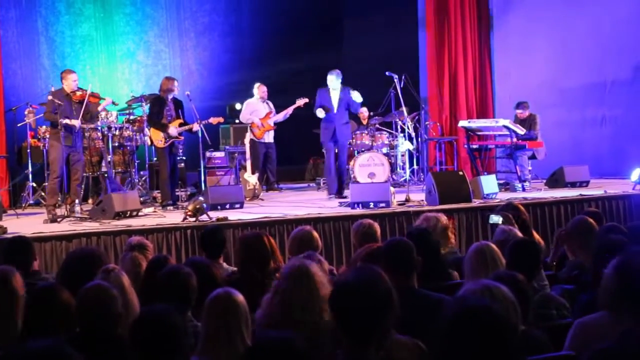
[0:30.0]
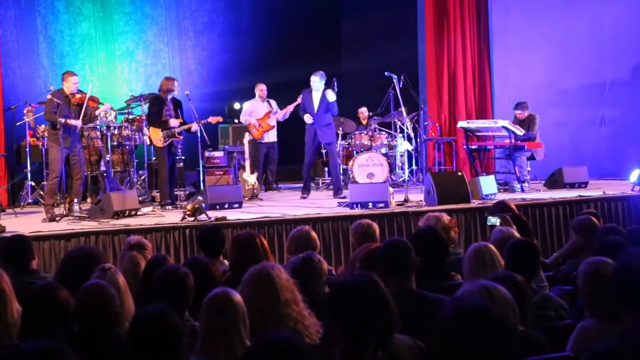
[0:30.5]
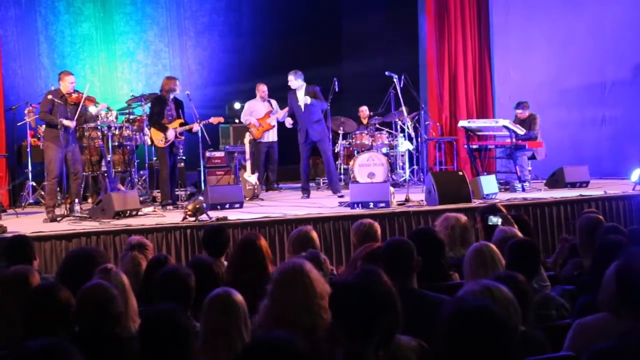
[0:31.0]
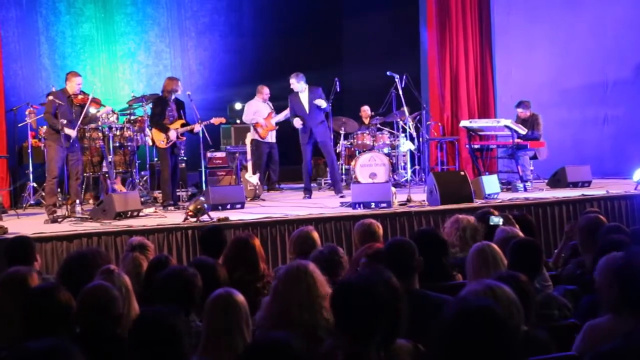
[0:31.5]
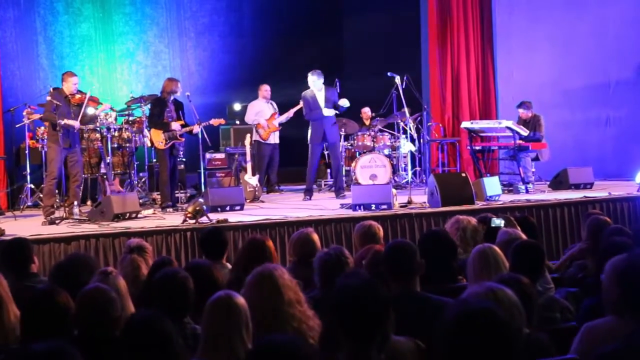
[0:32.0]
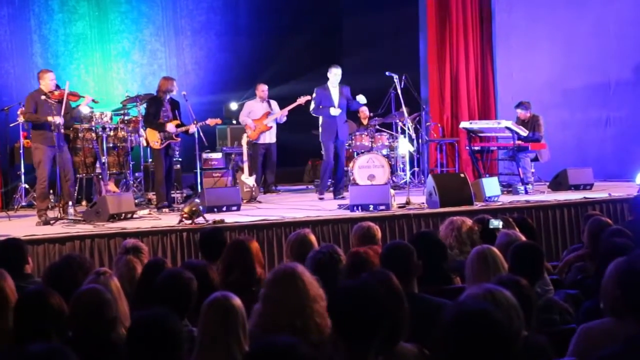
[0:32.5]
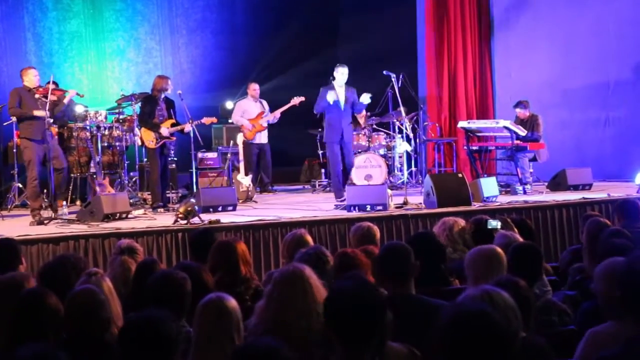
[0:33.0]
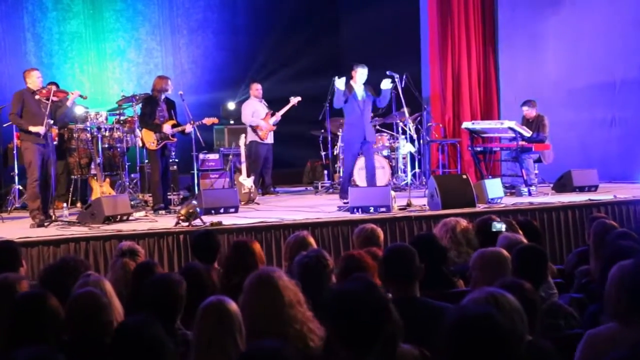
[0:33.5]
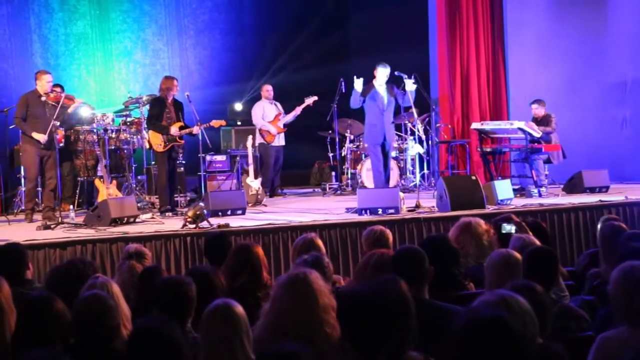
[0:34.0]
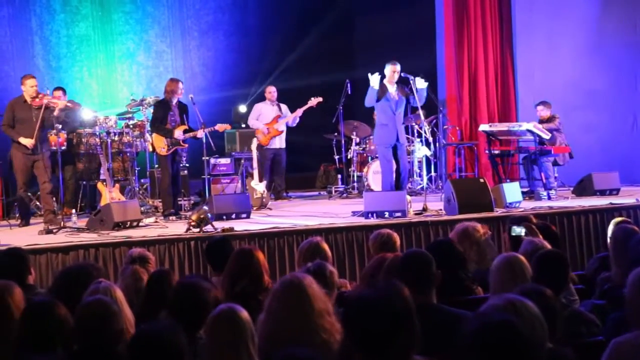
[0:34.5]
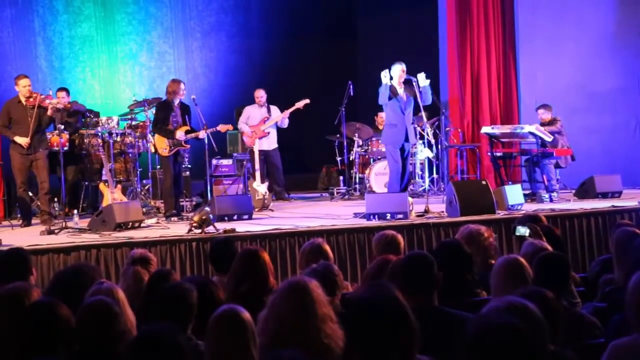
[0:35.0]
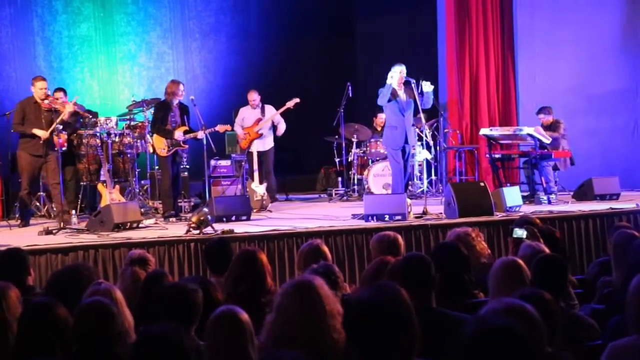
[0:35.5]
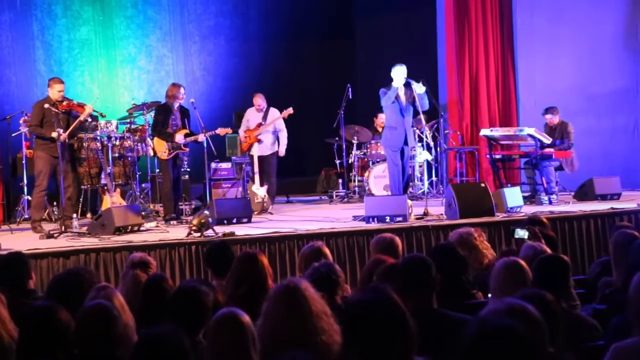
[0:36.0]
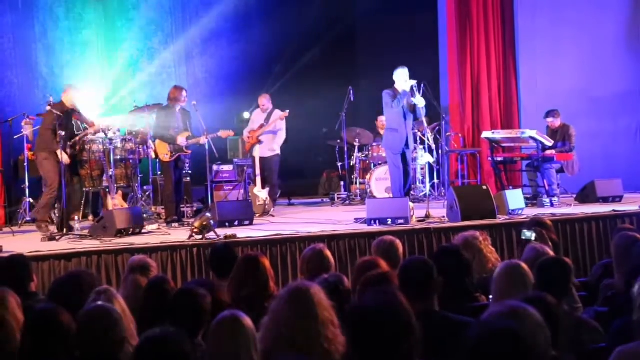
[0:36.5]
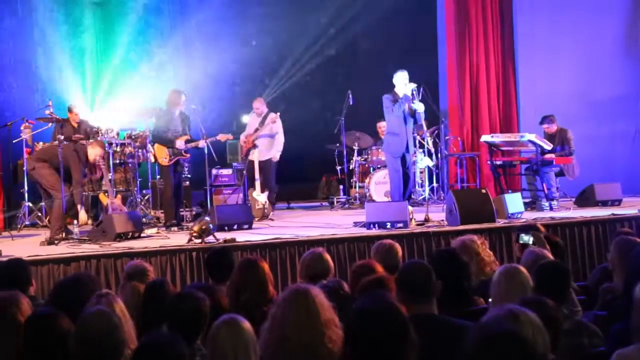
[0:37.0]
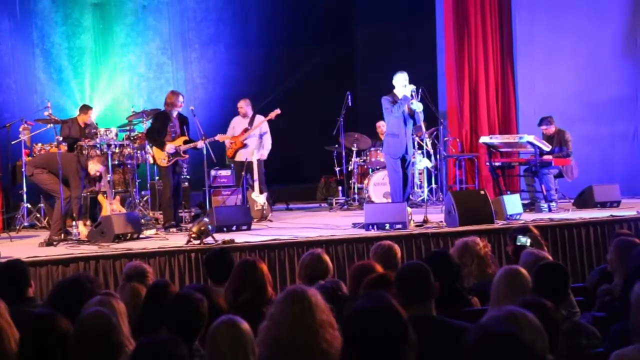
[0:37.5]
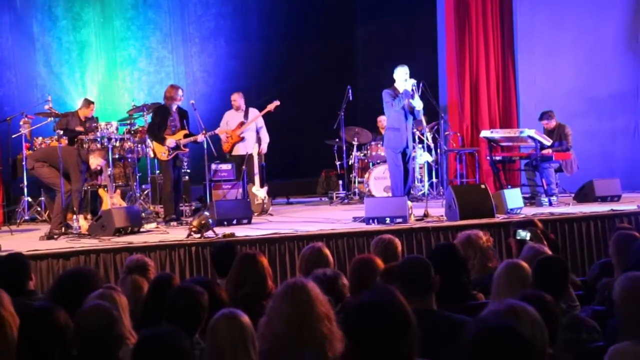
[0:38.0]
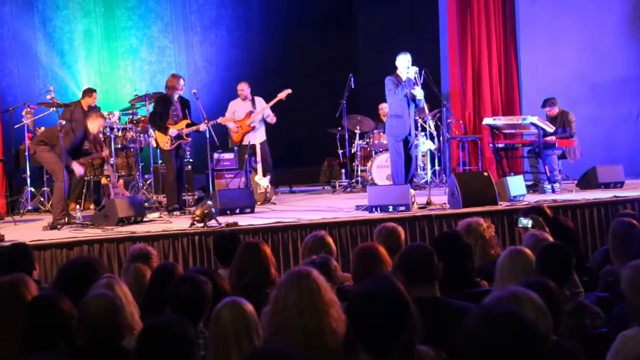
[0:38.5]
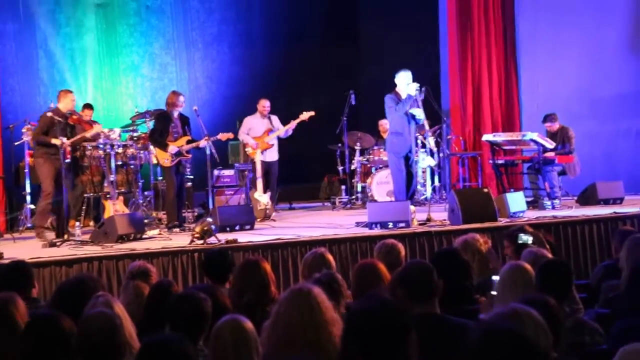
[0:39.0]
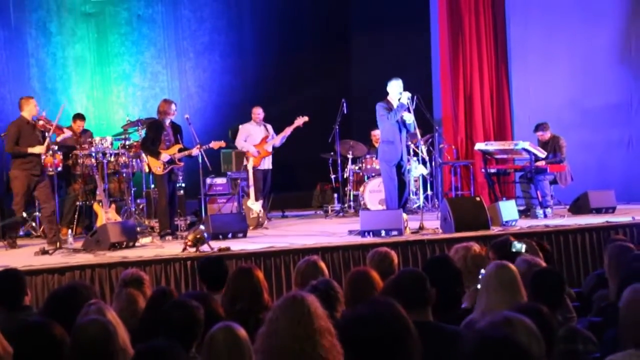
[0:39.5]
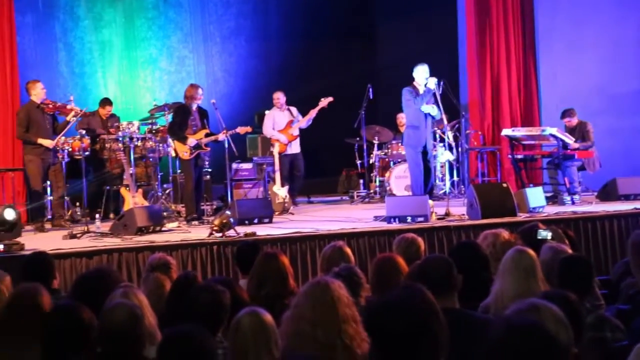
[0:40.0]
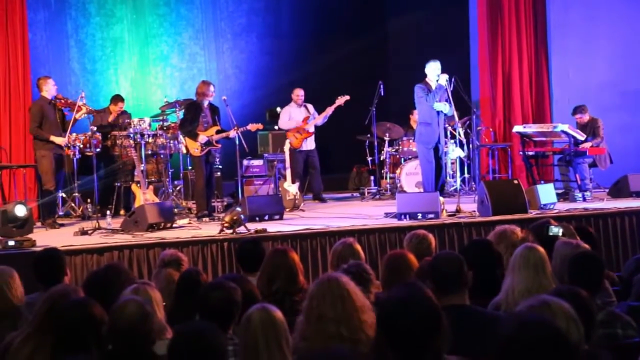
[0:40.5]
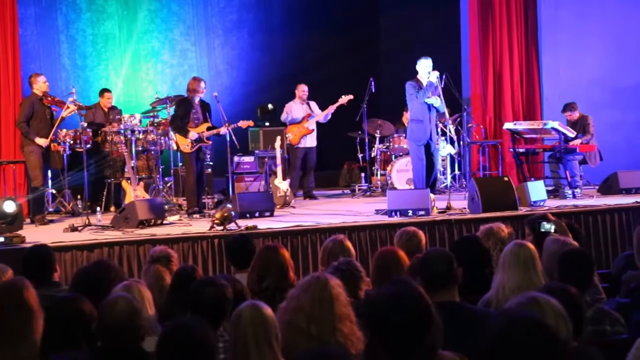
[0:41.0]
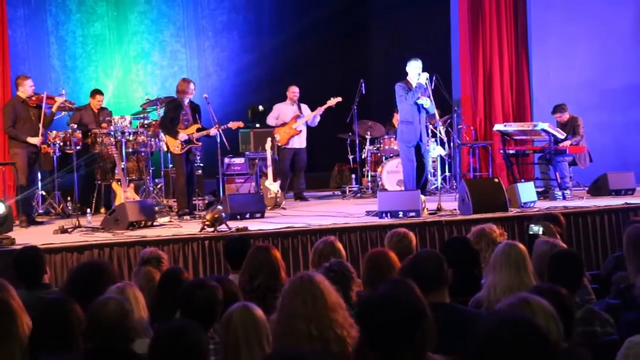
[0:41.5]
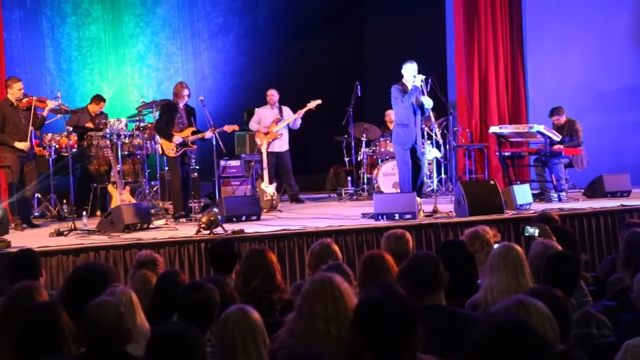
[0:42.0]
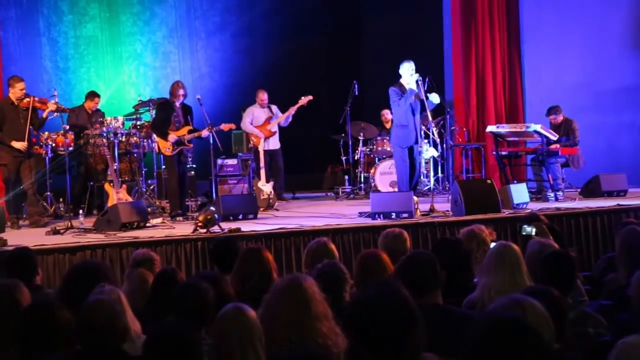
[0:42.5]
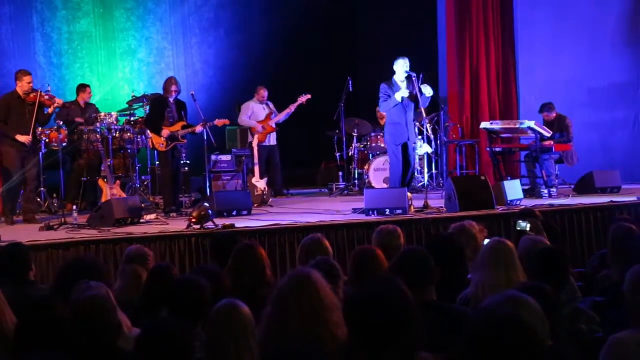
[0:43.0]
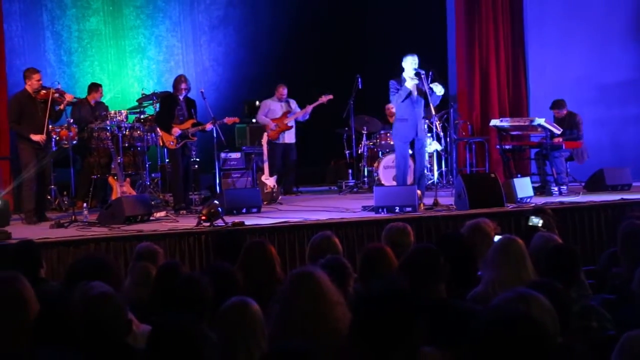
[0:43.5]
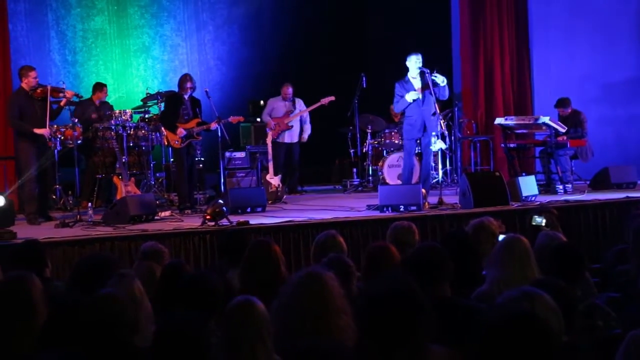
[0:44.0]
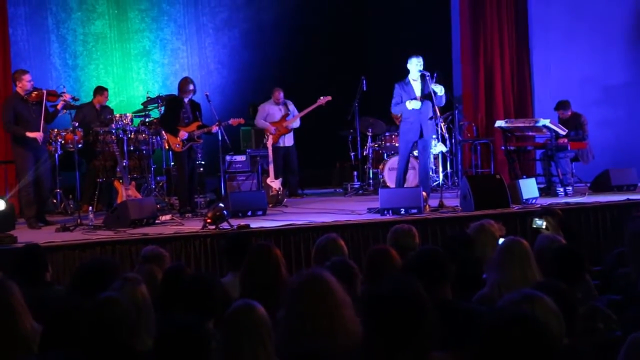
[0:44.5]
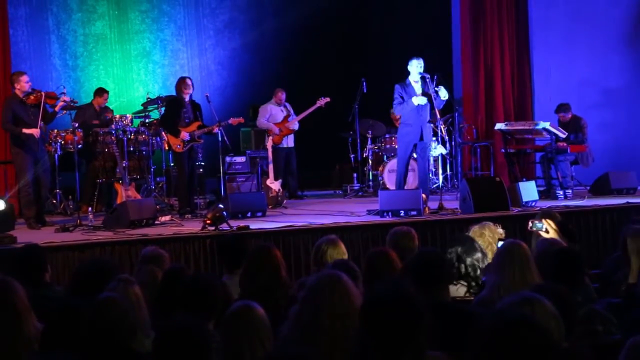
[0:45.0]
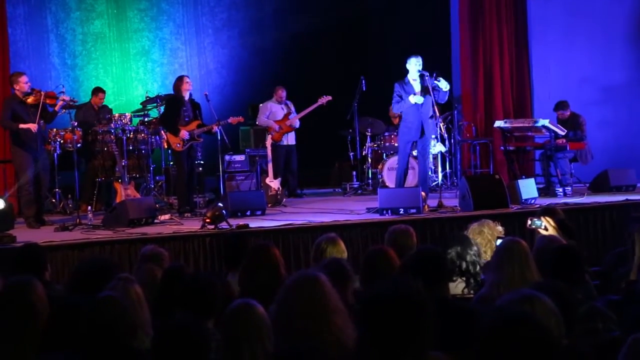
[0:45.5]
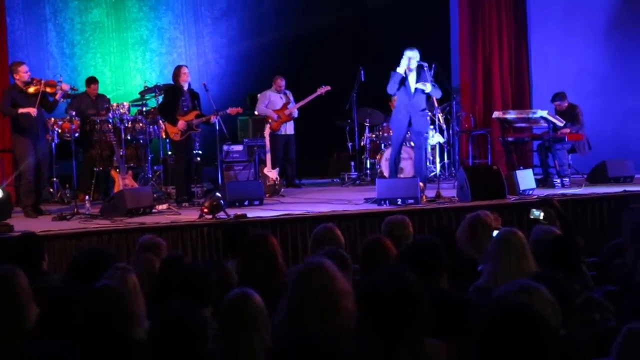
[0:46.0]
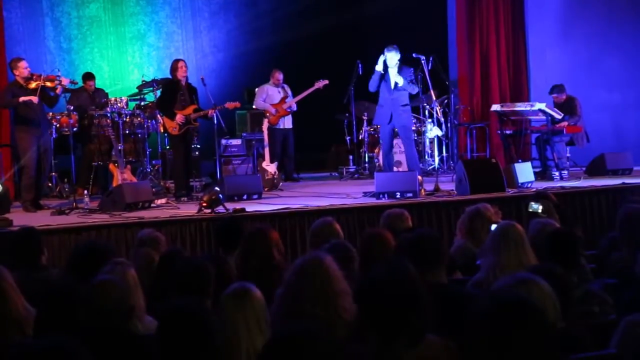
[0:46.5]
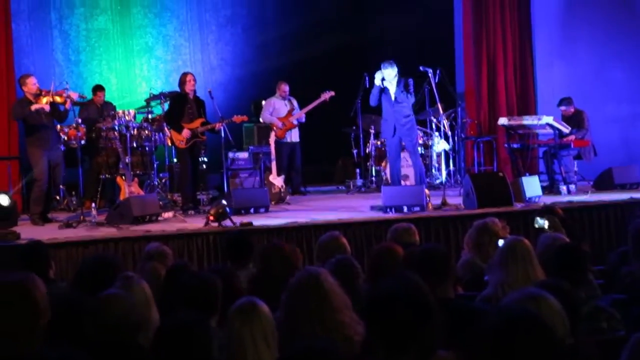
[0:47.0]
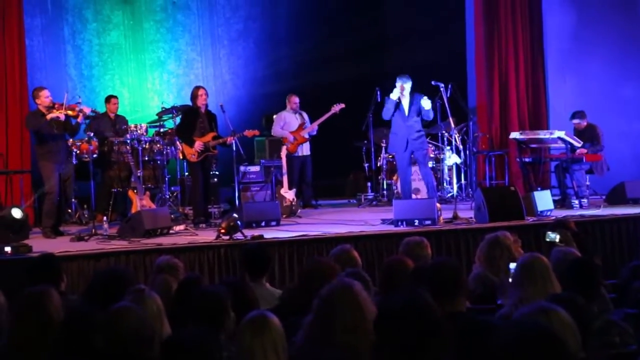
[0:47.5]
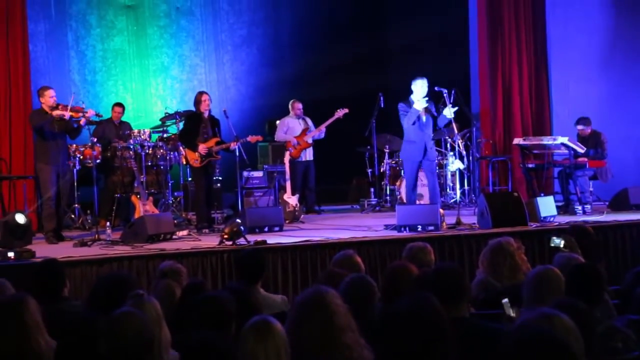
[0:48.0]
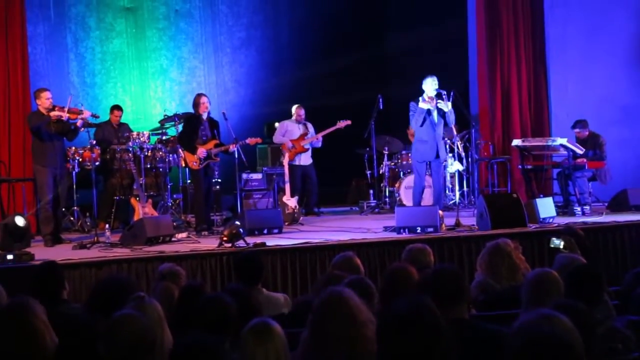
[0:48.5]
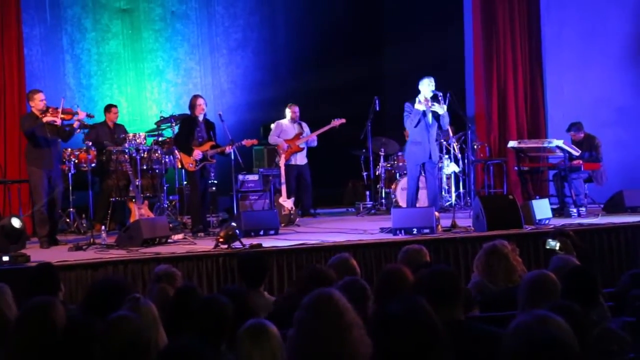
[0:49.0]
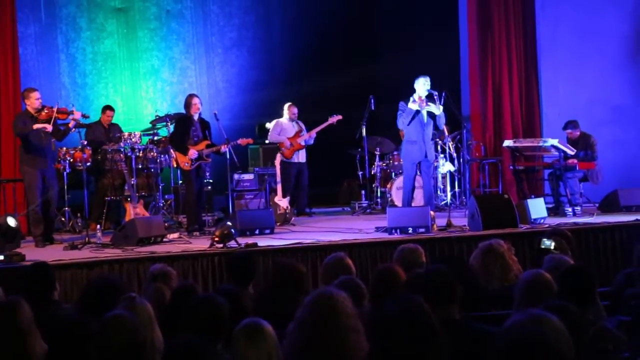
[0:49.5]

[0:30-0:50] The band members are engaged on stage. The lead singer moves around, moving his shoulders and waving his hands left to right, and marches a little. A few seconds in, he approaches the mic stand and starts singing into the mic, with his right hand over the mic and his left hand under it. The spotlight shines right in front of his face, so his face is barely visible because of the glow. The other members are behind him, seemingly at a good distance from the lead singer. Then the spotlights turn a deep blue, giving the stage a cool, glowing blue color palette, while the singer keeps singing and makes a lot of hand gestures around his face.